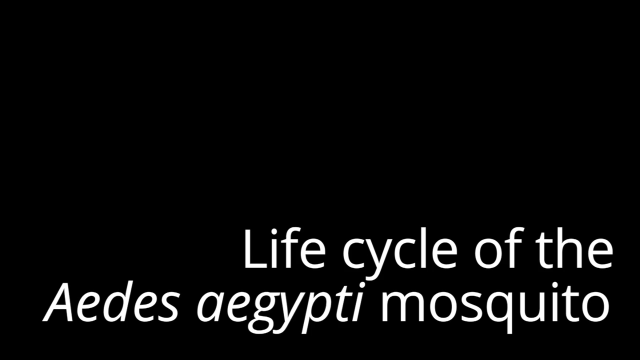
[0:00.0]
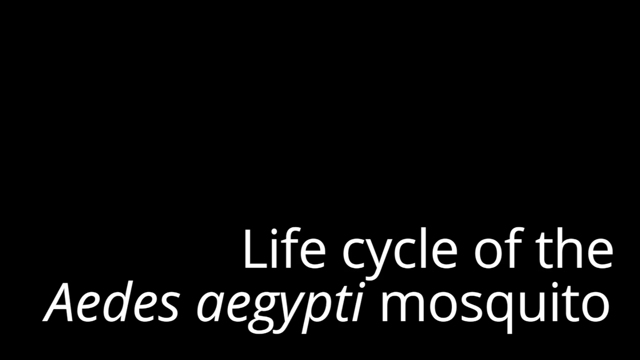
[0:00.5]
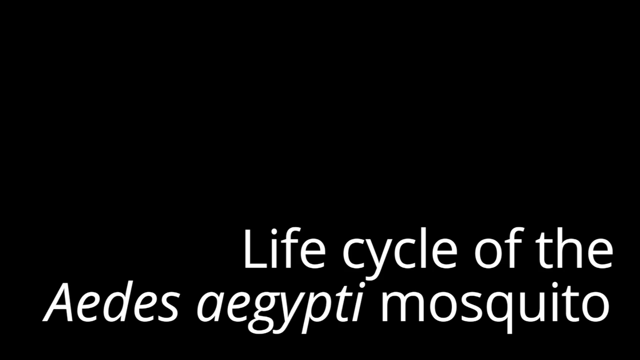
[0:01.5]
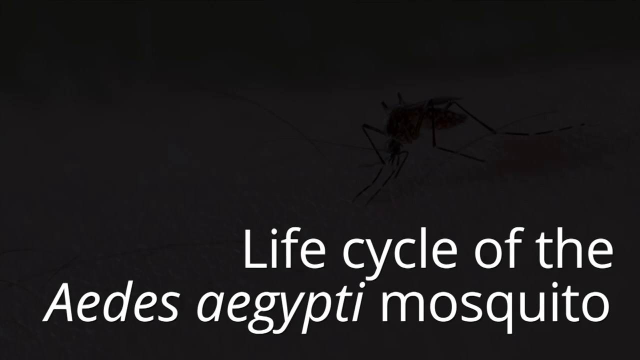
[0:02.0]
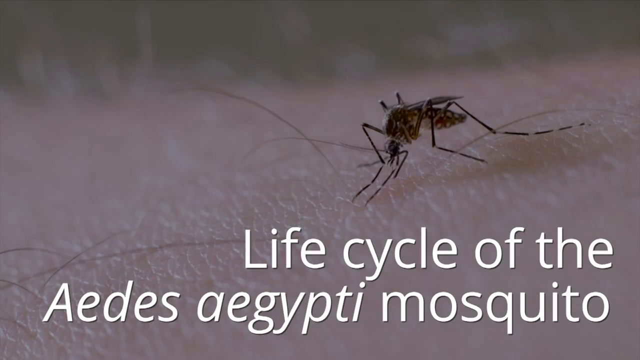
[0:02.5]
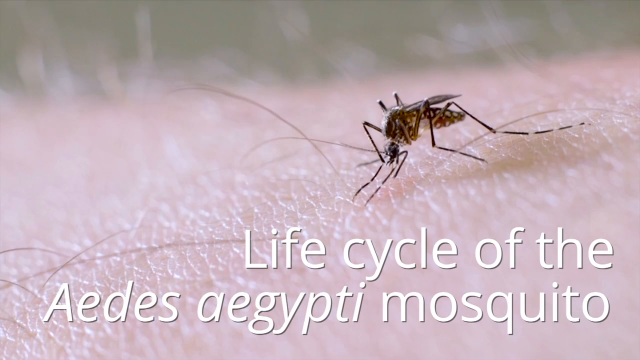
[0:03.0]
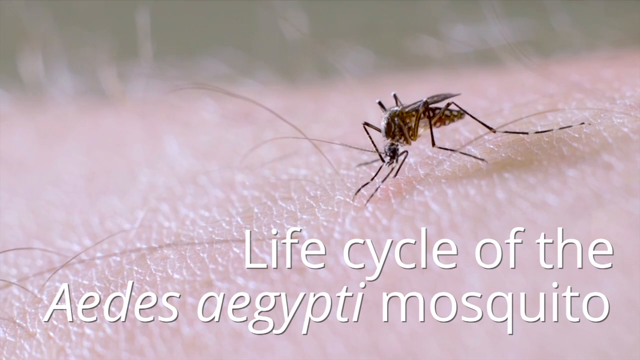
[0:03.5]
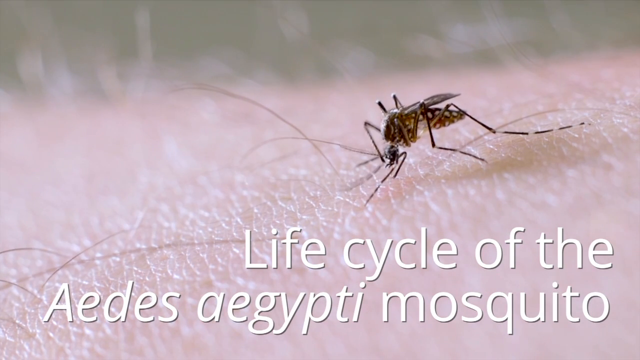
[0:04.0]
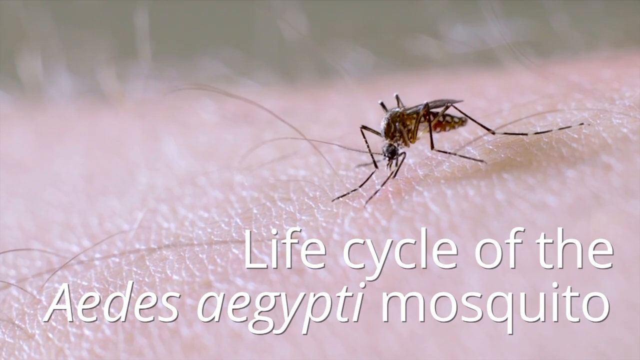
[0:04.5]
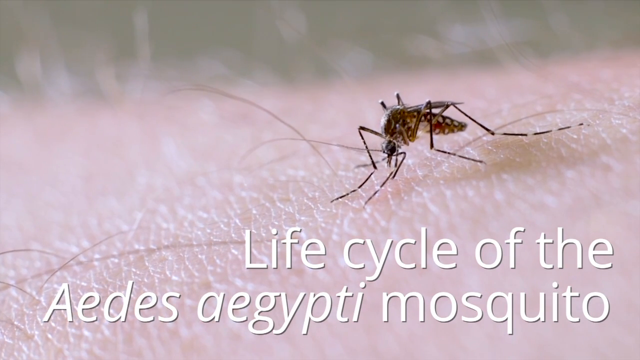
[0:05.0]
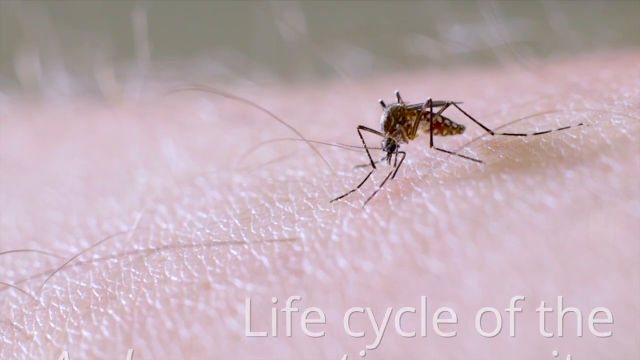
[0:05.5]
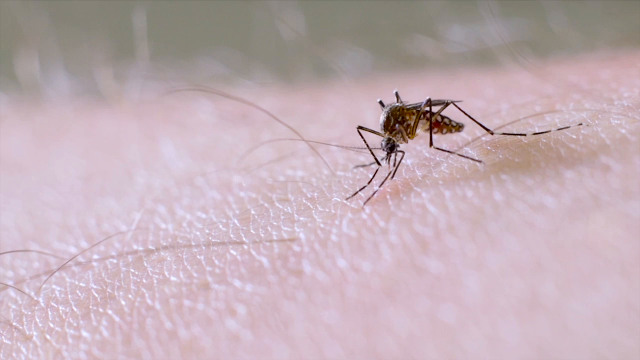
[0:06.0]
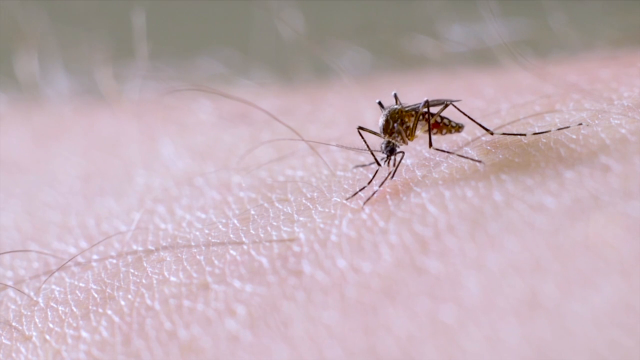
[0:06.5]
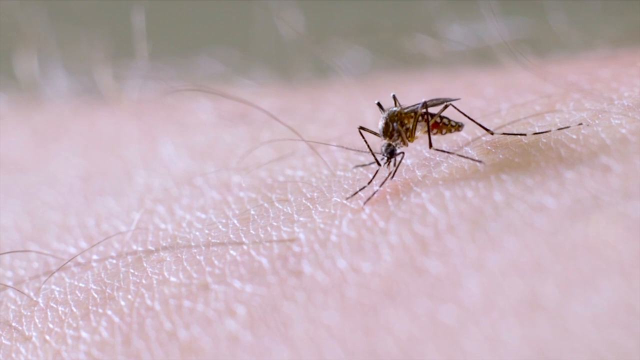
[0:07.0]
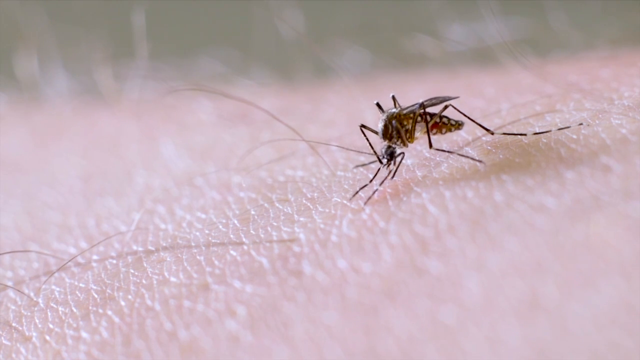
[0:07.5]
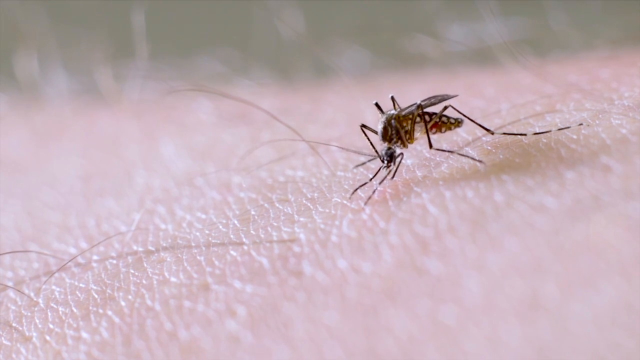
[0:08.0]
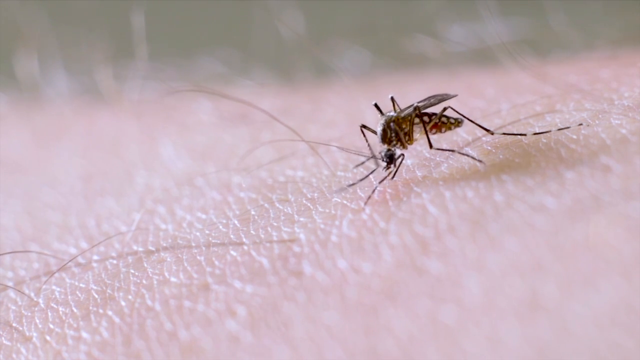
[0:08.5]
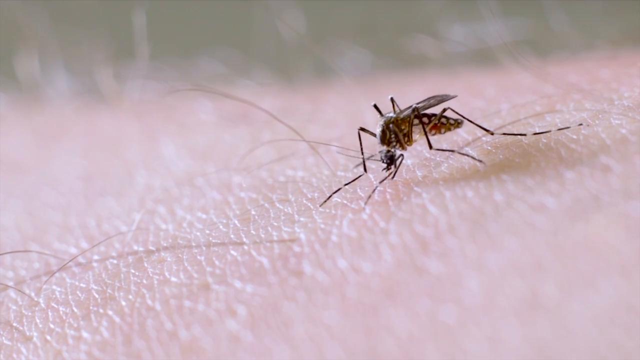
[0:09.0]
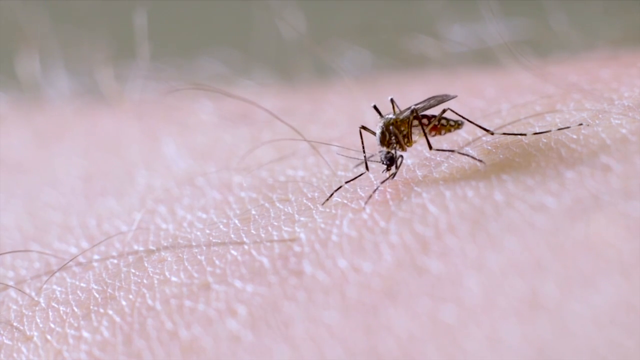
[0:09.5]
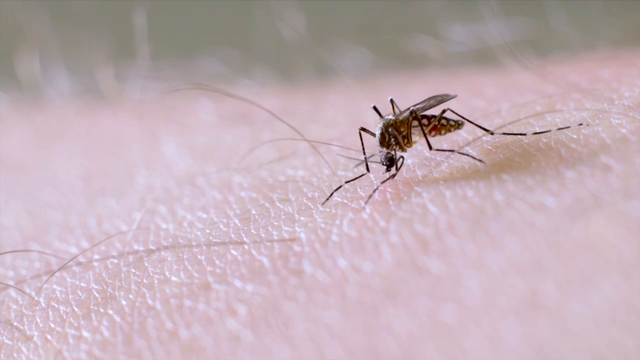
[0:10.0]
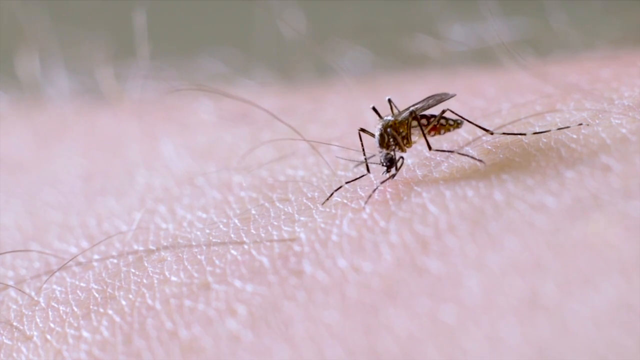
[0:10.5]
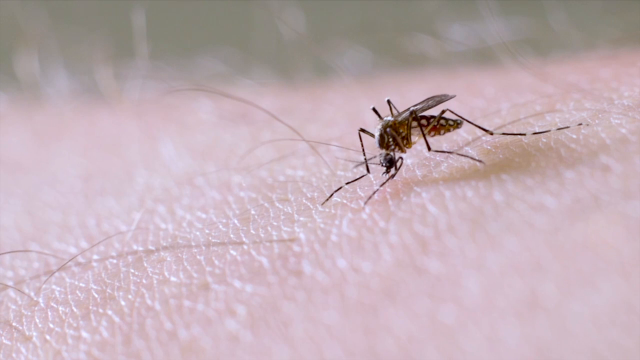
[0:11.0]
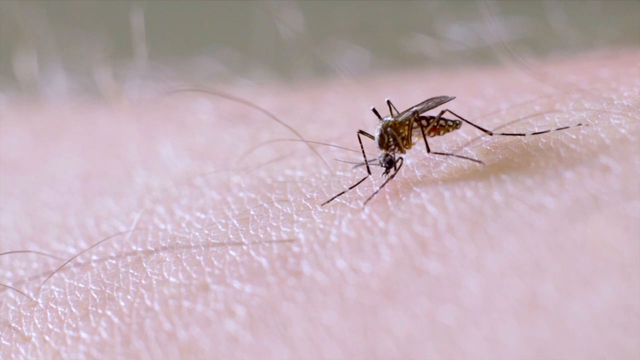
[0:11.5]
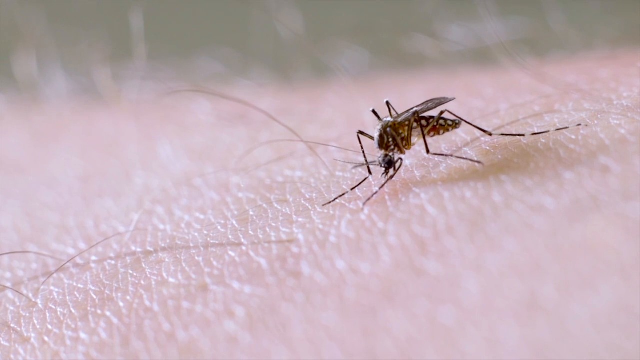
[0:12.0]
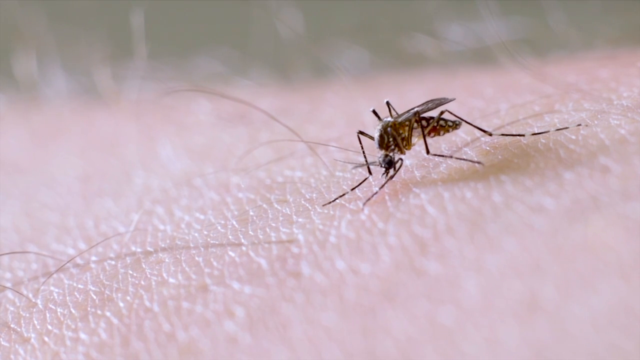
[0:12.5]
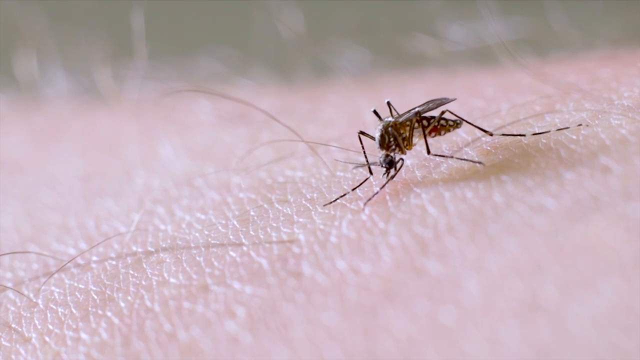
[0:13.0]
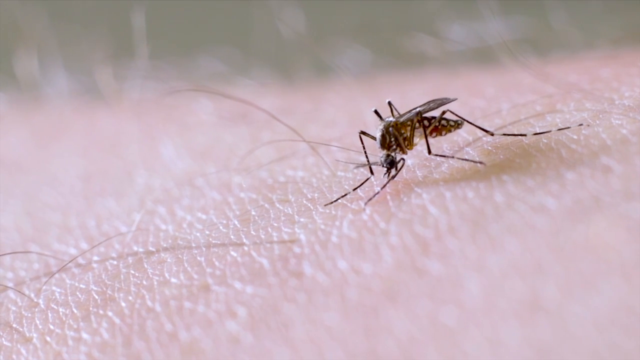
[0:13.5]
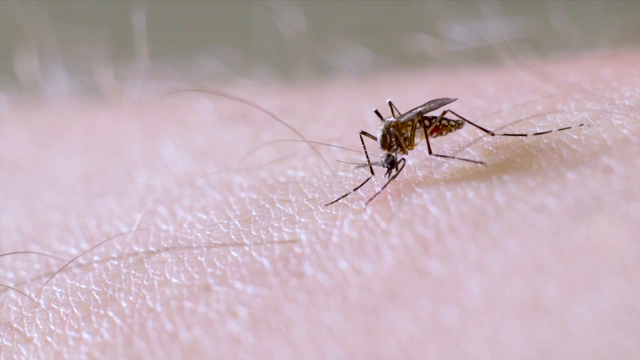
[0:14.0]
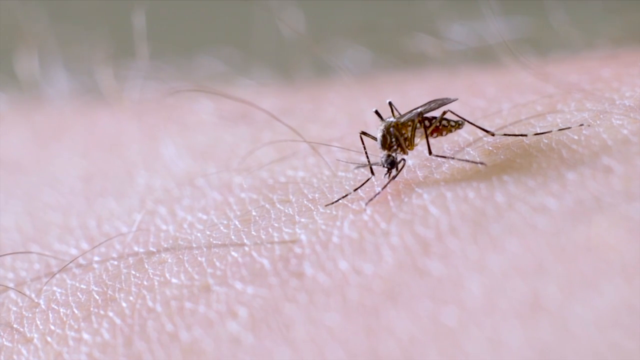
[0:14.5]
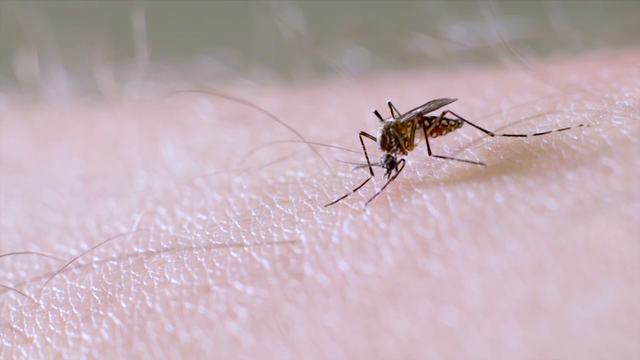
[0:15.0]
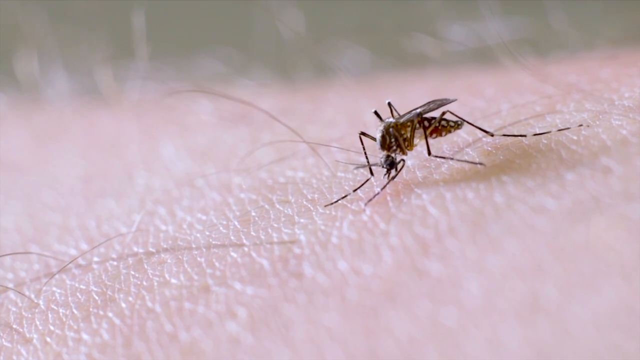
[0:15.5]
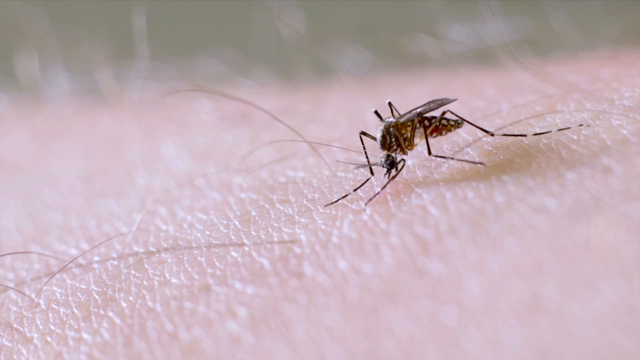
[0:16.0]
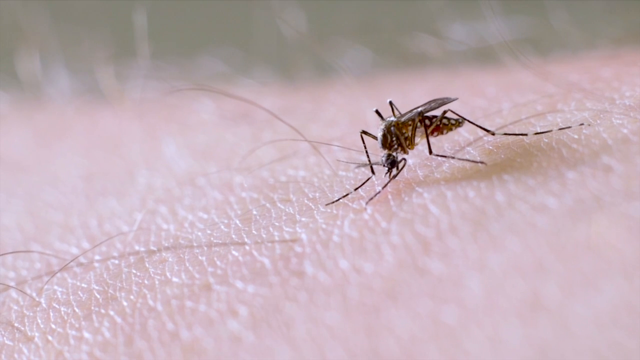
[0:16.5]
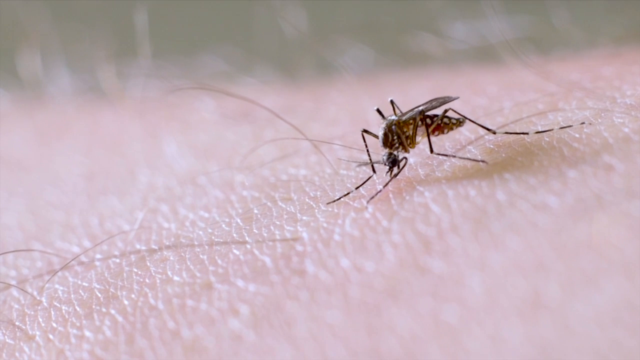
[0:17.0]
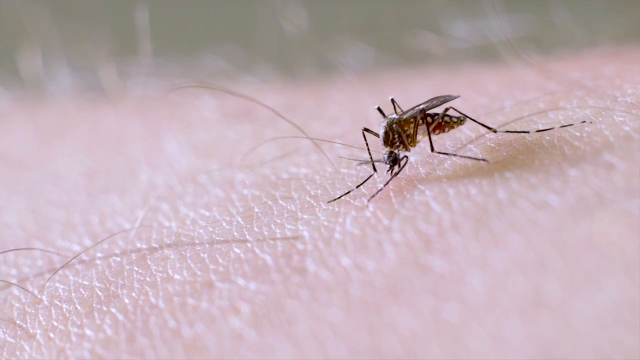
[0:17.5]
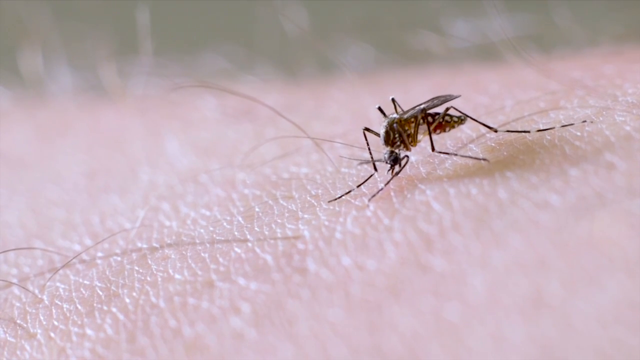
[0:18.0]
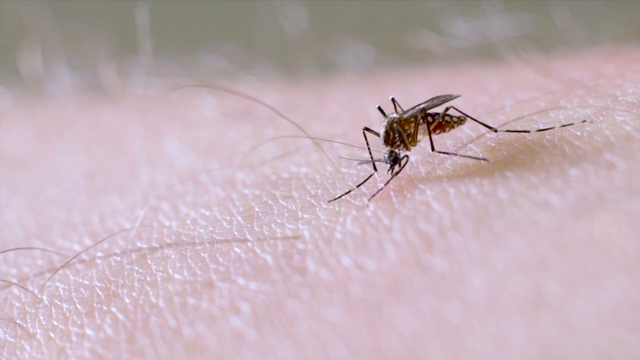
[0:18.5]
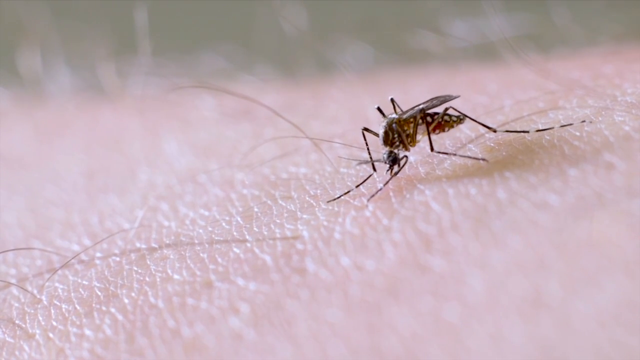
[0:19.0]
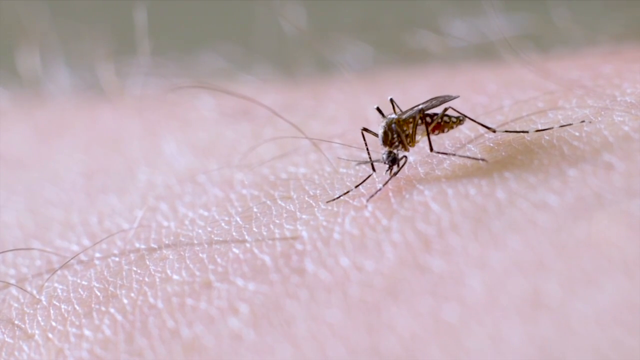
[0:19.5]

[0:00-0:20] White text on a black background reads "the life cycle of the Aedes aegypti mosquito." The scene then changes to a mosquito sitting on top of the arm of what looks like a white person, and the mosquito continues to suck on the arm. The arm is hairy and the person looks Caucasian. The mosquito is brown with white dots or patches, and it has legs and what looks like antennas. It keeps sucking blood from the arm. The person's face is not shown, only the arm. The picture quality is good.